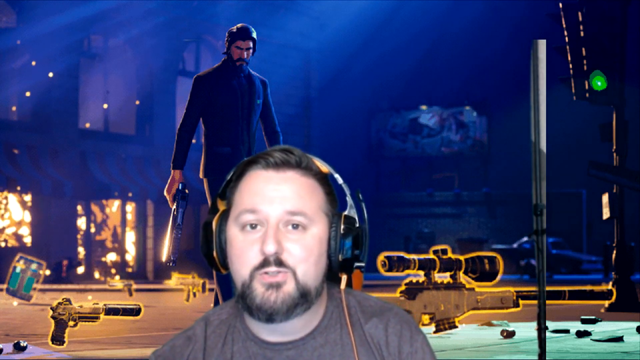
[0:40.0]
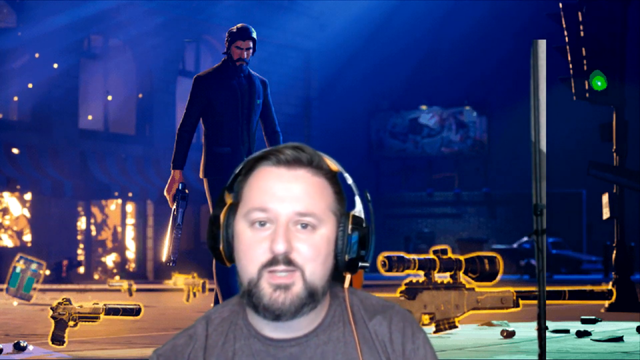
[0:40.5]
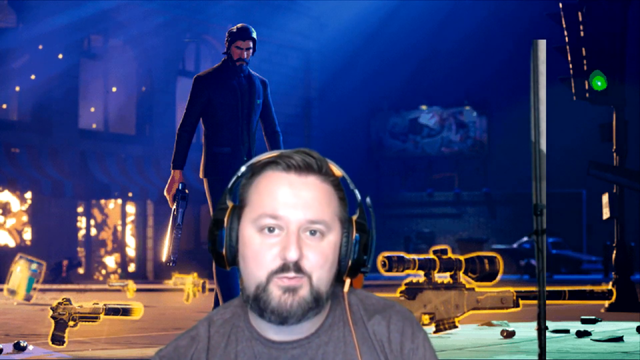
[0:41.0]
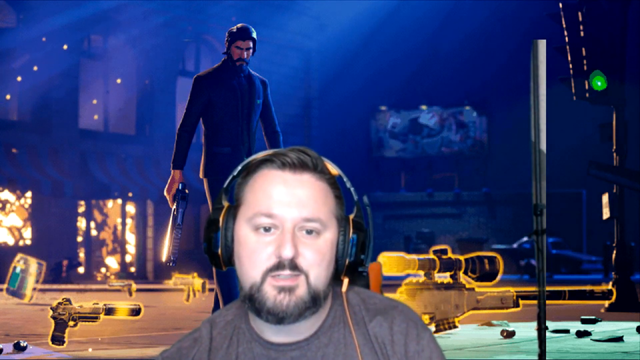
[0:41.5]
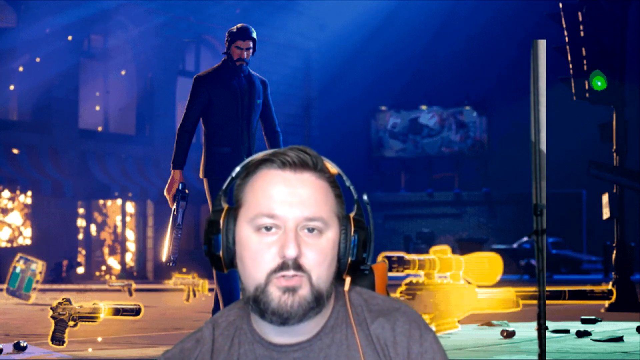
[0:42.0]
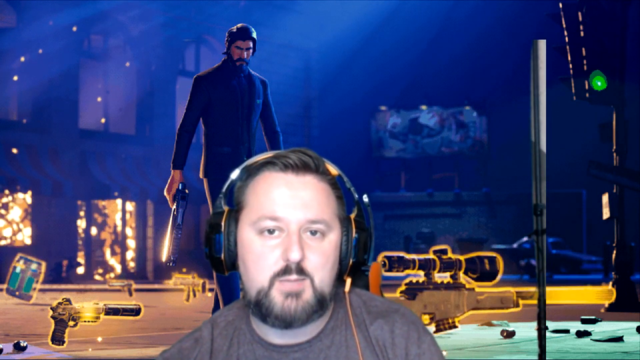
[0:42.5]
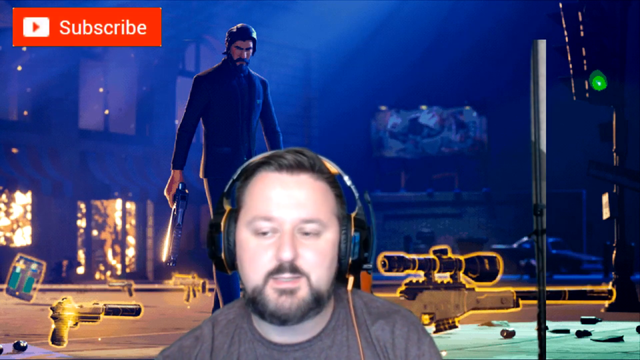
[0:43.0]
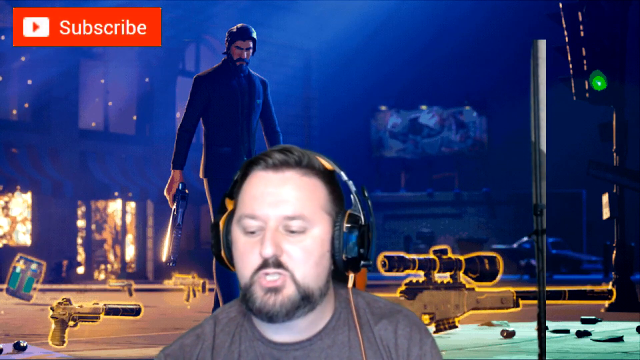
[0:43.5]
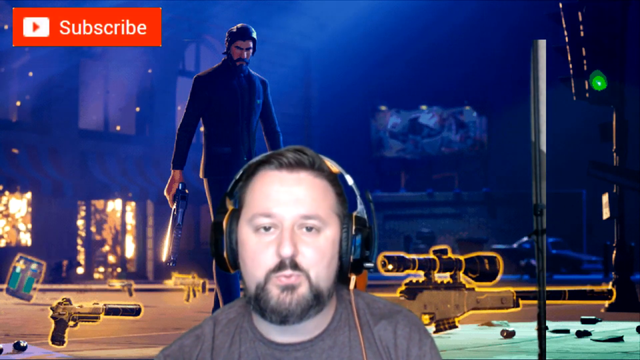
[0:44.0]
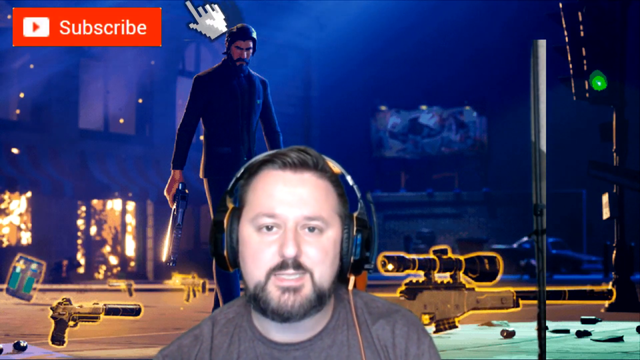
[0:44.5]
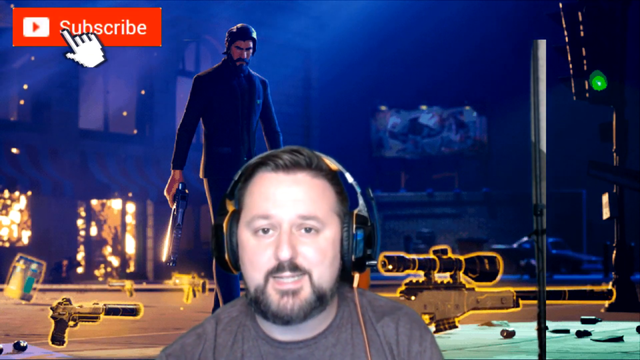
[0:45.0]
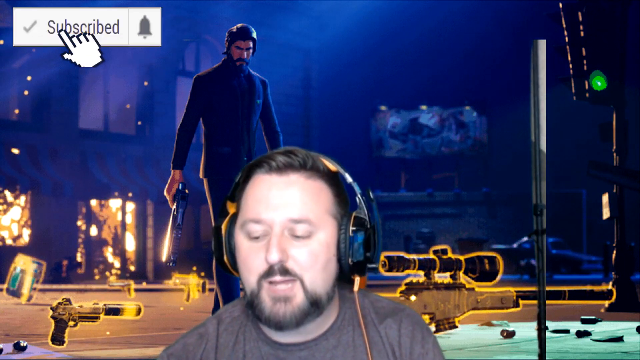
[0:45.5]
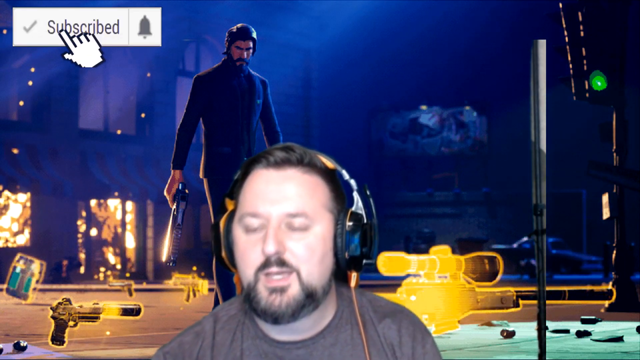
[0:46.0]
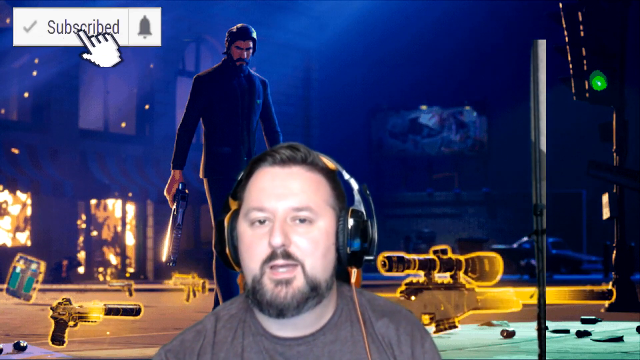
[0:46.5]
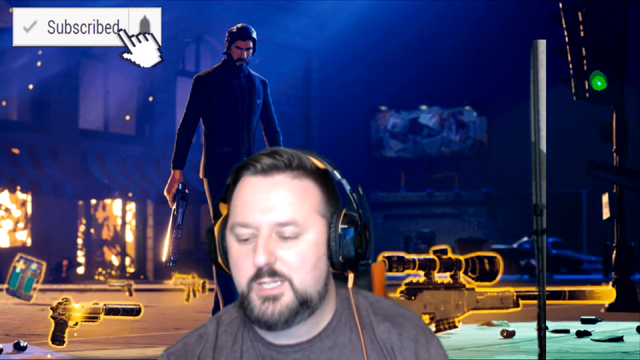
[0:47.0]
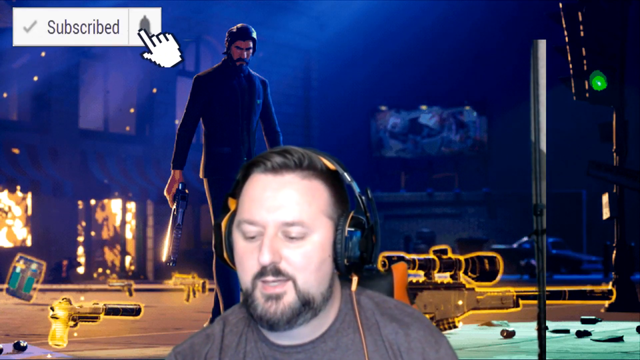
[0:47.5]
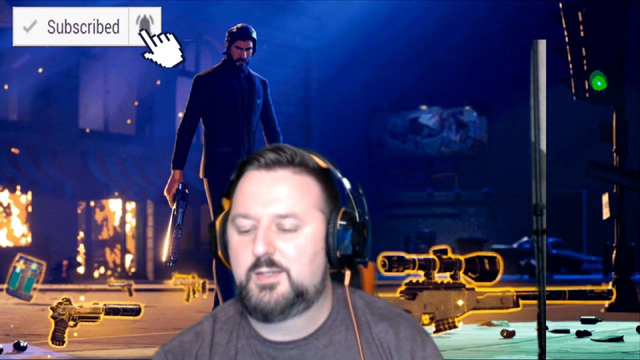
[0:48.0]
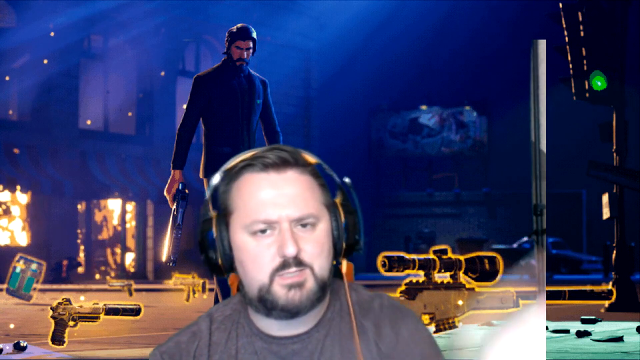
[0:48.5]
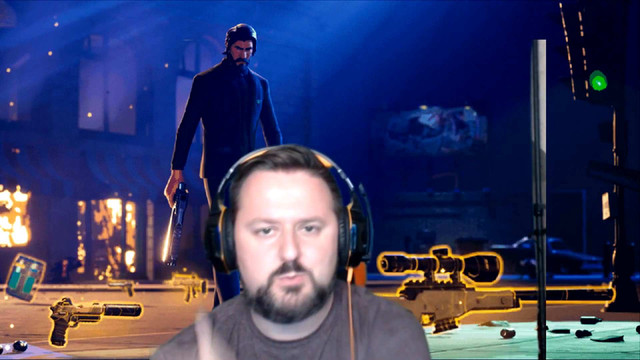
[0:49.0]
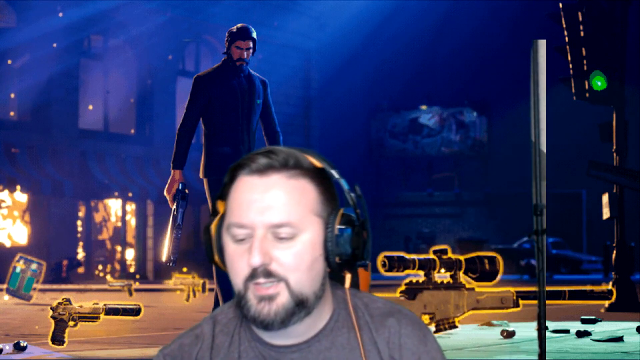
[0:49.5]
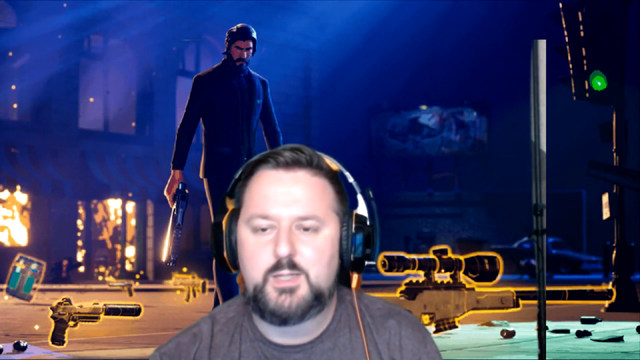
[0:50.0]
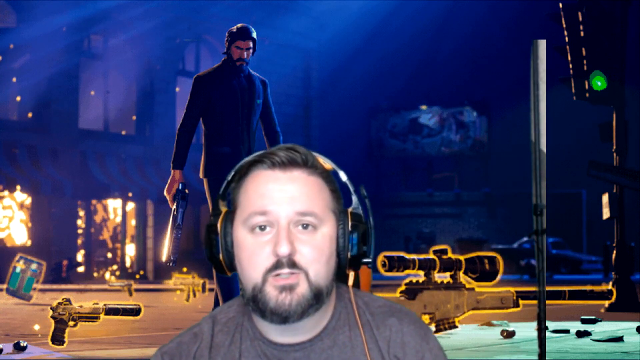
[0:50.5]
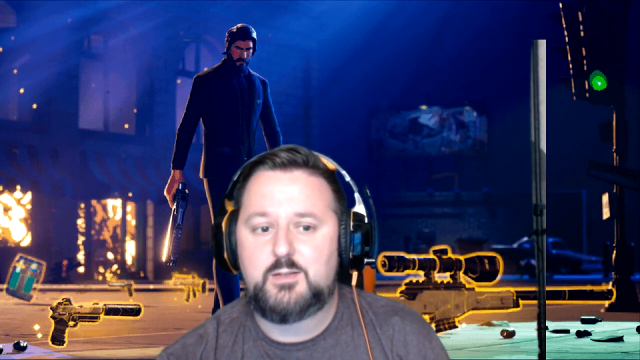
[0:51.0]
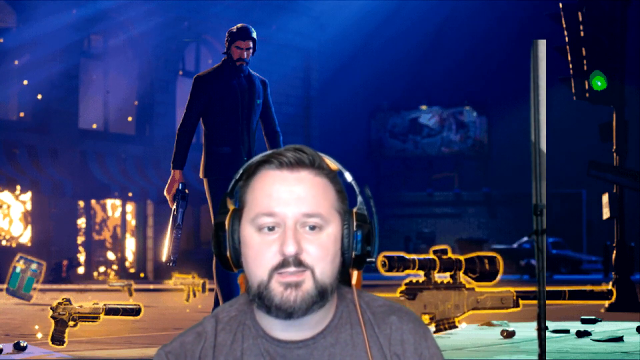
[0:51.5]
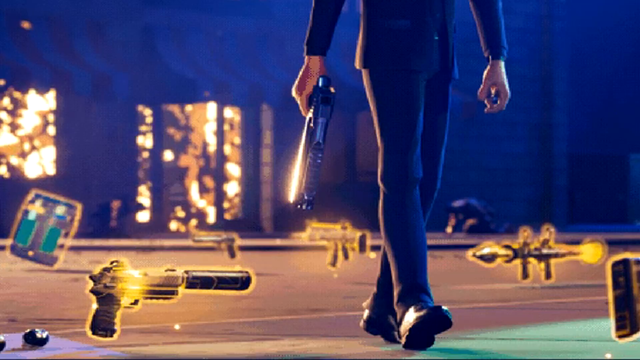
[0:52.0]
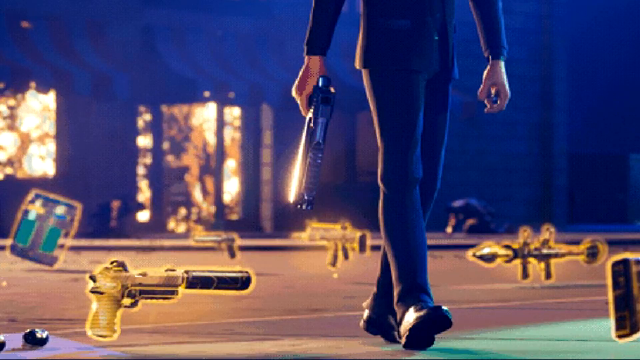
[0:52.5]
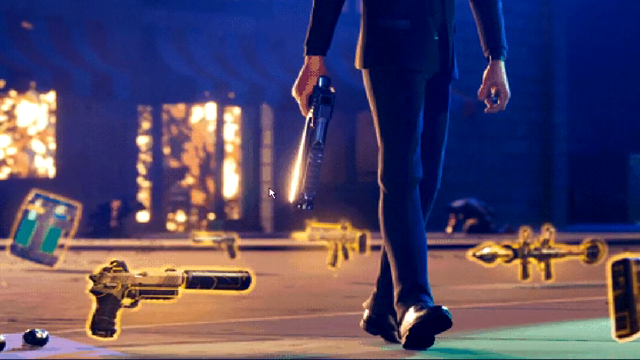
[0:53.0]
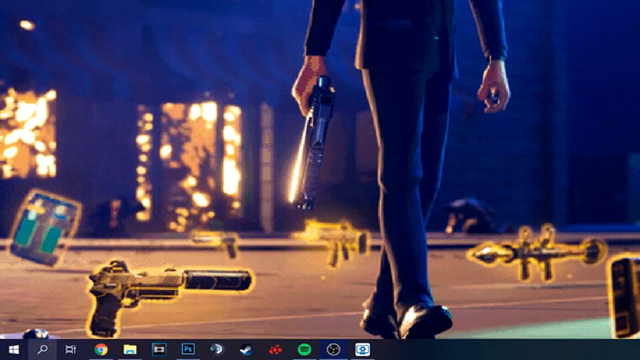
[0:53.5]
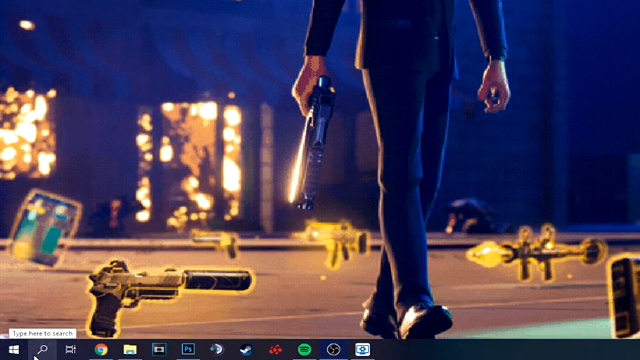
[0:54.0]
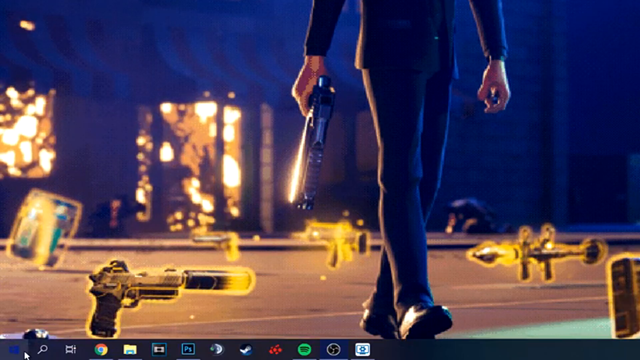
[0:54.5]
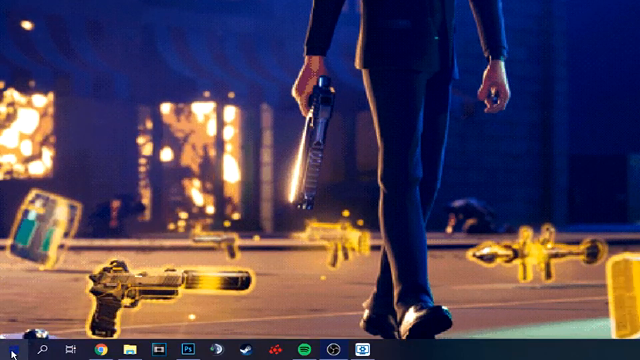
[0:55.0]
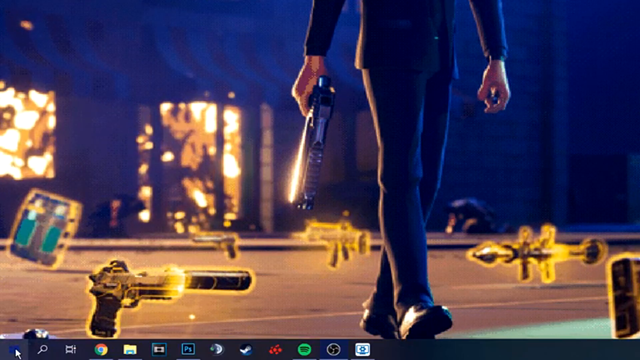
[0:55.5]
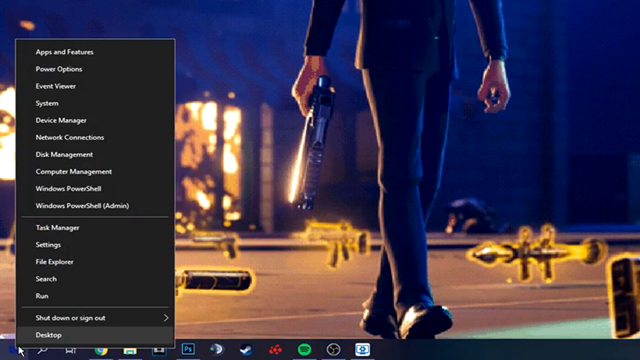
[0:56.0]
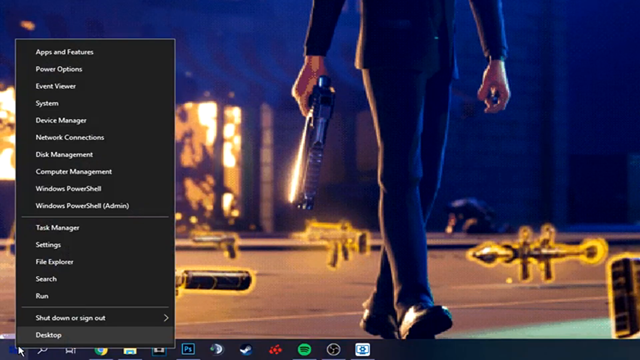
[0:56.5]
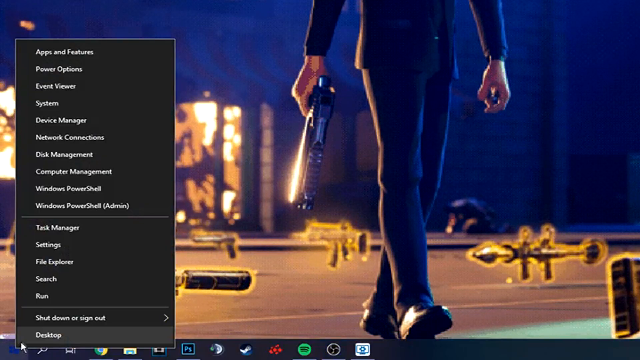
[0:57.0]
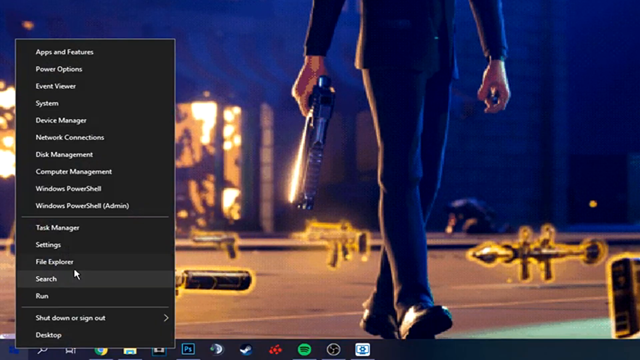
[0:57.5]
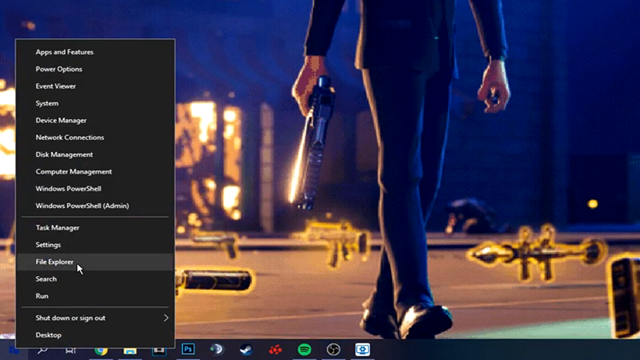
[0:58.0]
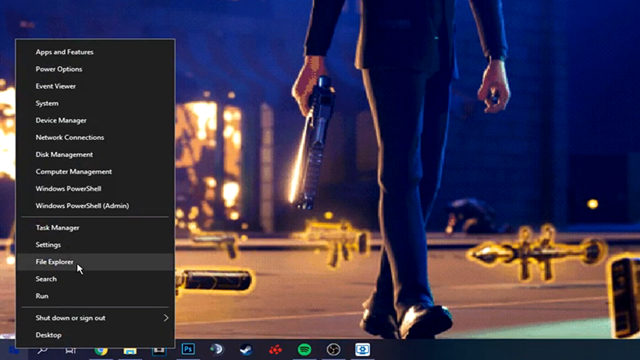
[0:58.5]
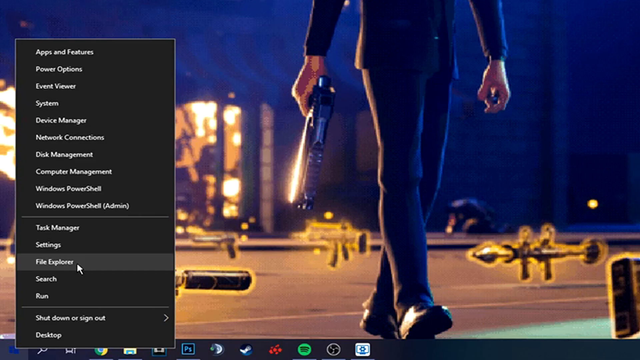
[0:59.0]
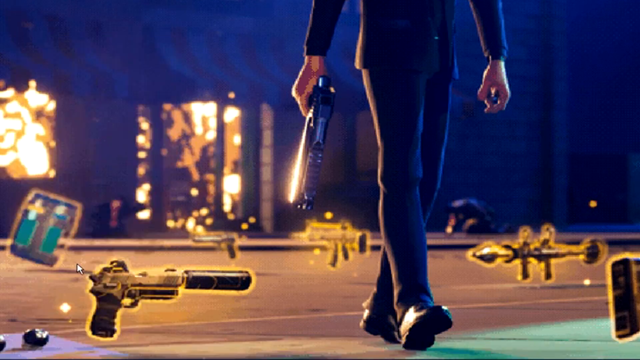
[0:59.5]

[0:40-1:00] The man looks to be perhaps in his 30s. A window pops up in the upper left corner with a red subscribe button, and a pointer finger representing a mouse clicks it; the button turns gray with a little checkmark and a bell notification symbol. It looks like the man is talking on a YouTube channel of sorts. Then the man disappears and the view zooms in on one of the guns in the background. A mouse cursor appears from the bottom left-hand side. The guns are outlined in gold, and some light reflects off them as the video plays. A menu then pops up with a bunch of different options, looking like a generic computer menu with power options, device manager and system, and he clicks the file Explorer tab.